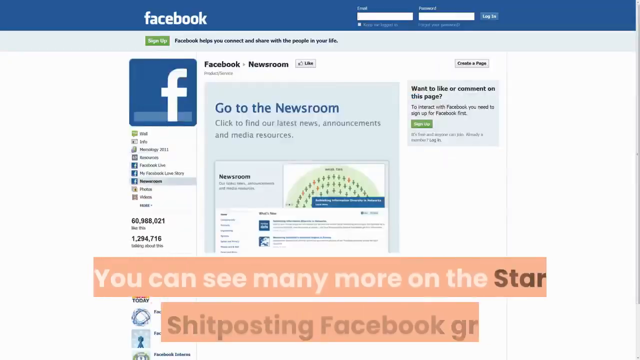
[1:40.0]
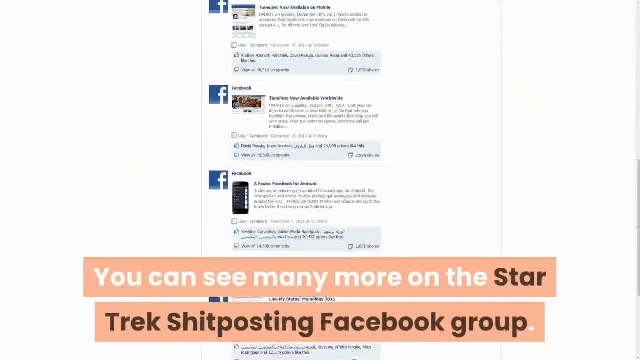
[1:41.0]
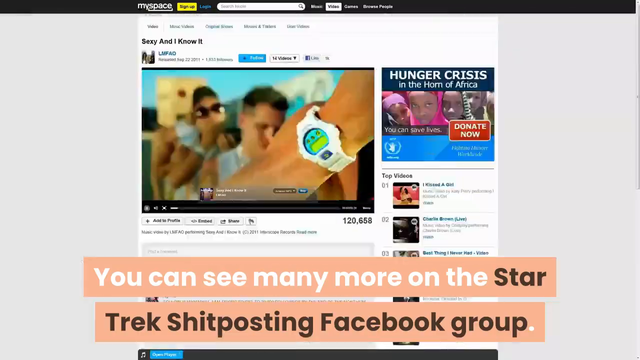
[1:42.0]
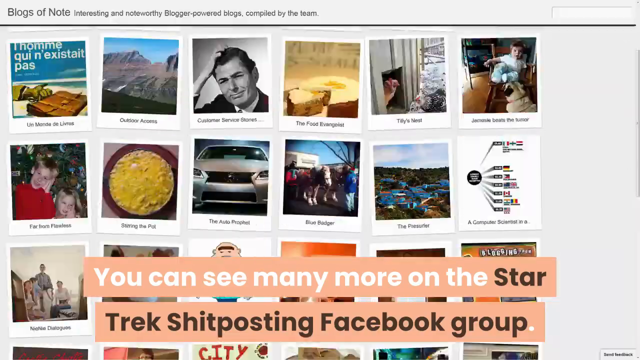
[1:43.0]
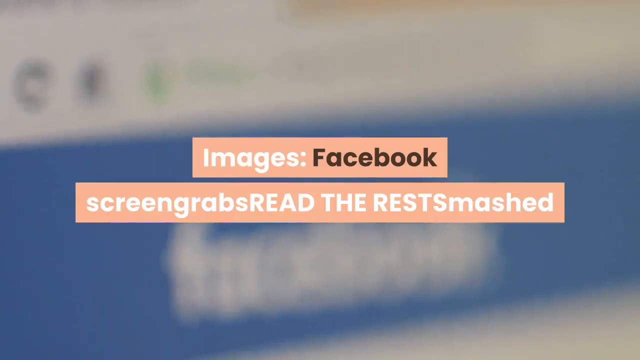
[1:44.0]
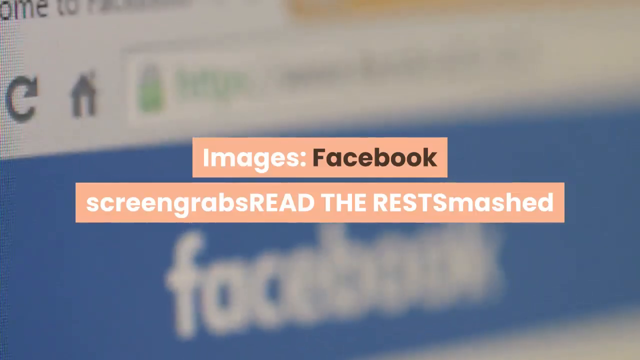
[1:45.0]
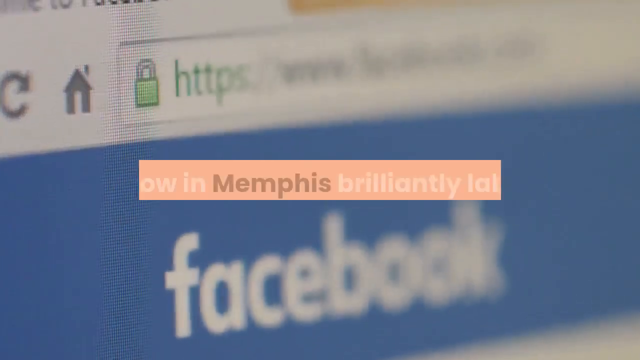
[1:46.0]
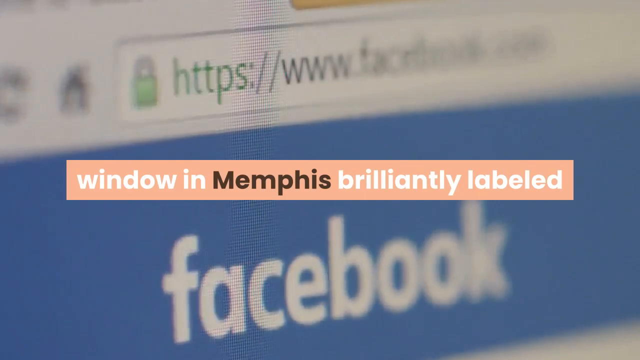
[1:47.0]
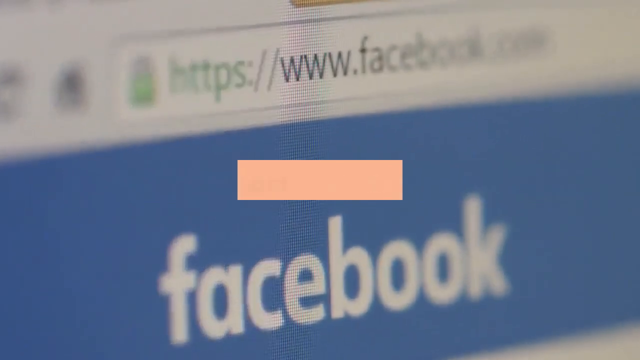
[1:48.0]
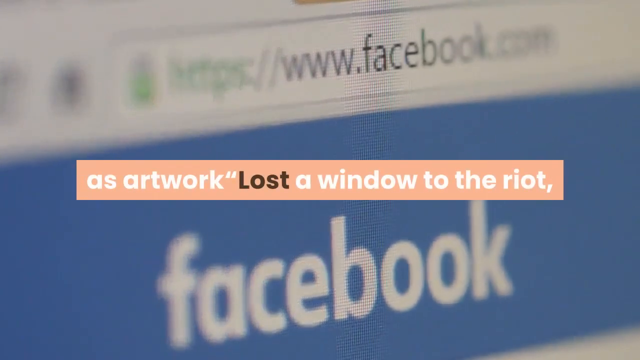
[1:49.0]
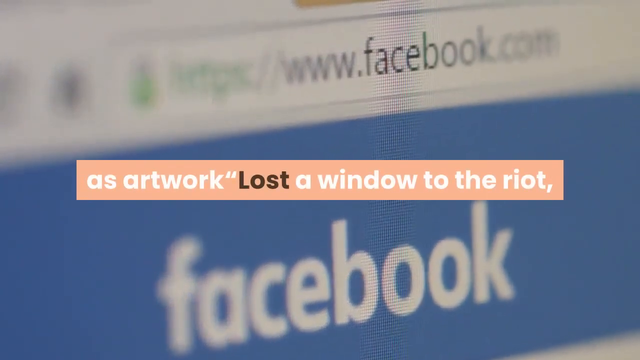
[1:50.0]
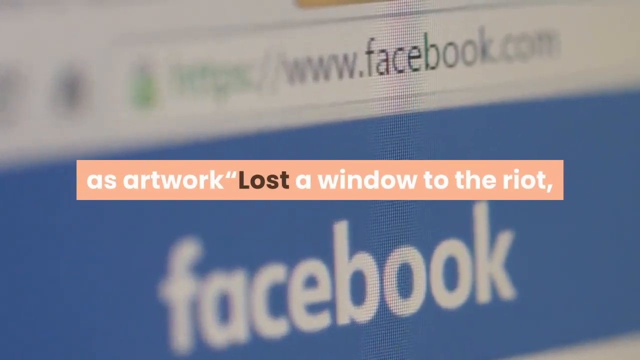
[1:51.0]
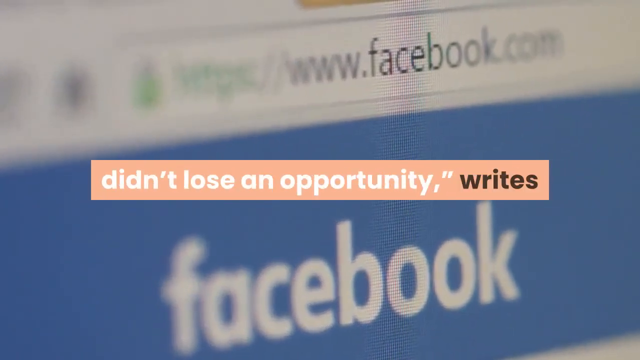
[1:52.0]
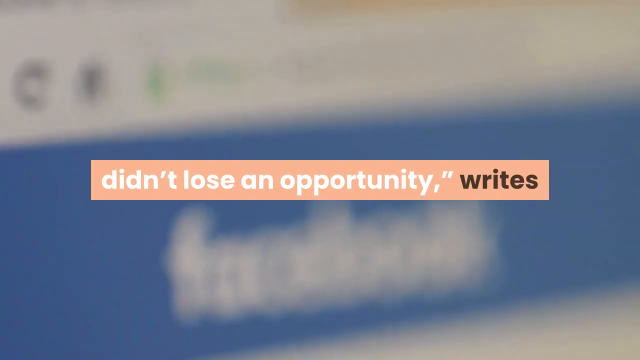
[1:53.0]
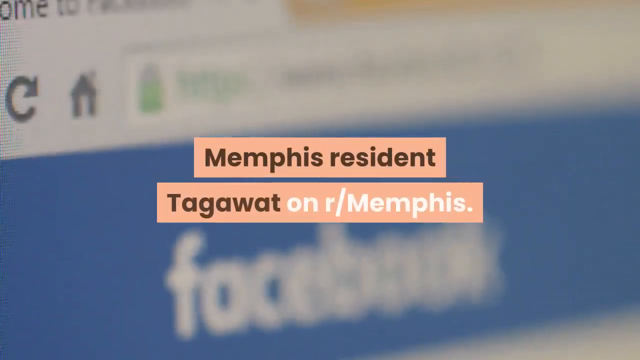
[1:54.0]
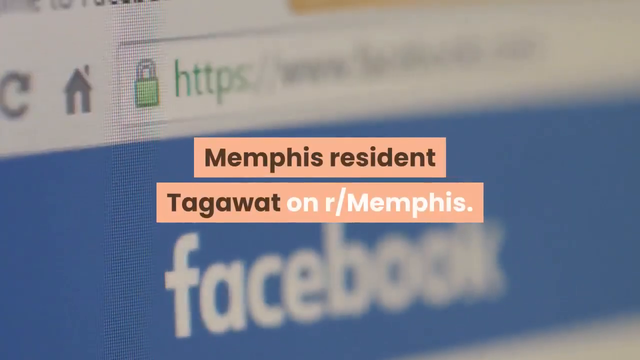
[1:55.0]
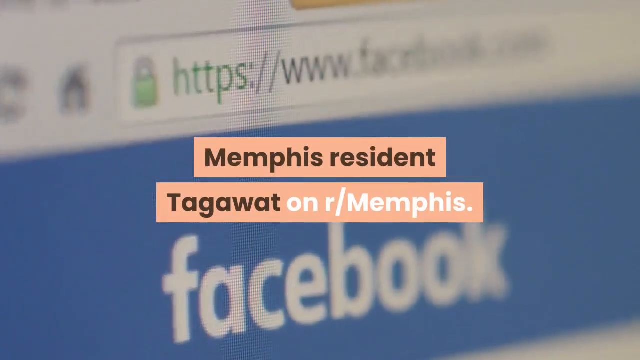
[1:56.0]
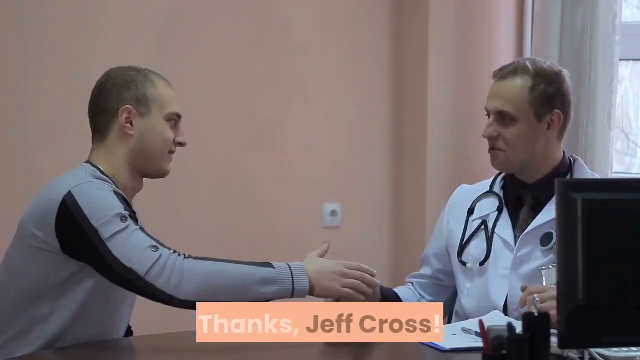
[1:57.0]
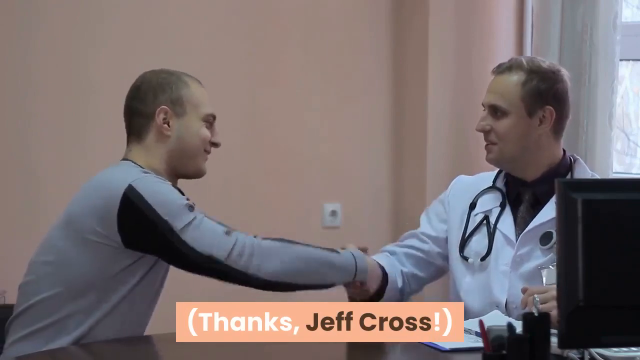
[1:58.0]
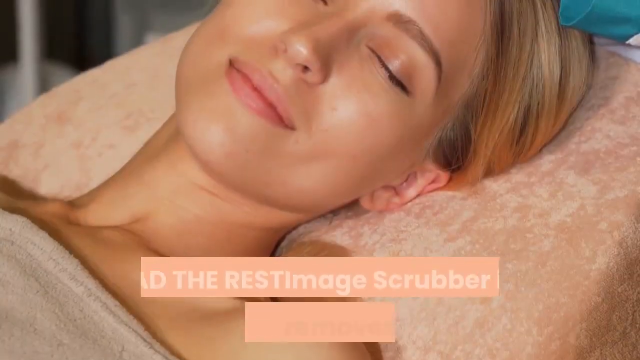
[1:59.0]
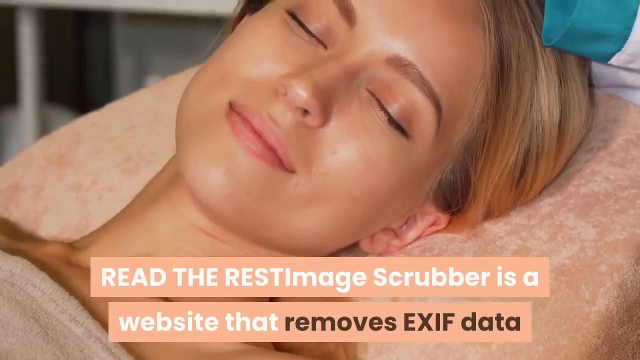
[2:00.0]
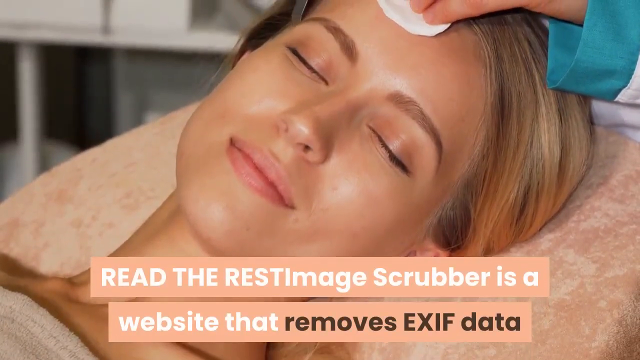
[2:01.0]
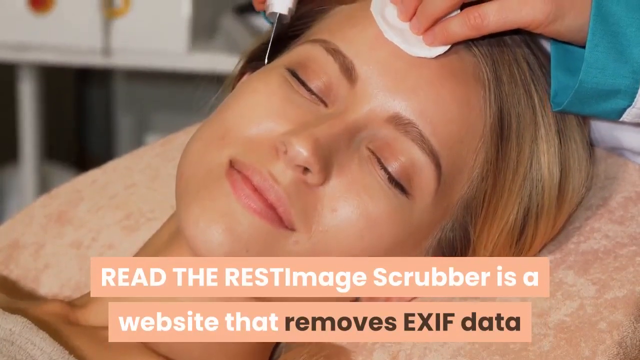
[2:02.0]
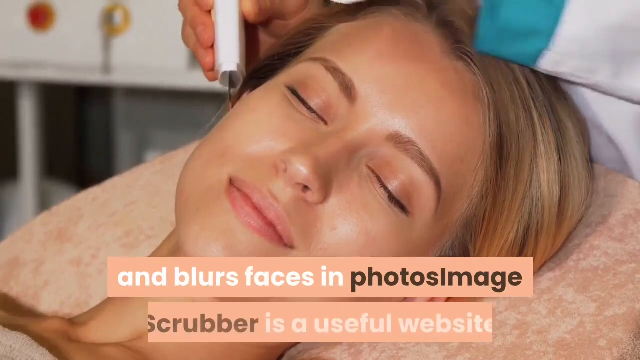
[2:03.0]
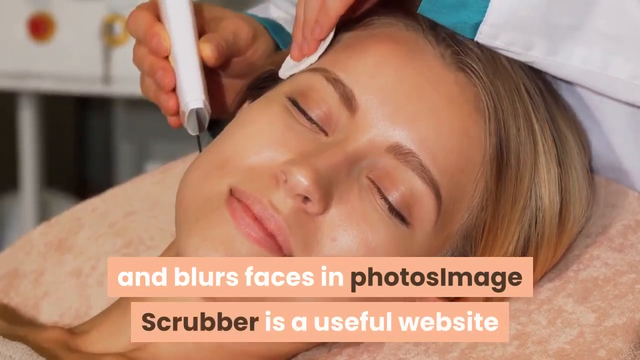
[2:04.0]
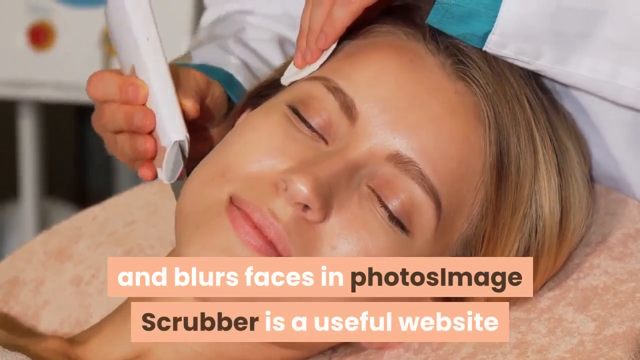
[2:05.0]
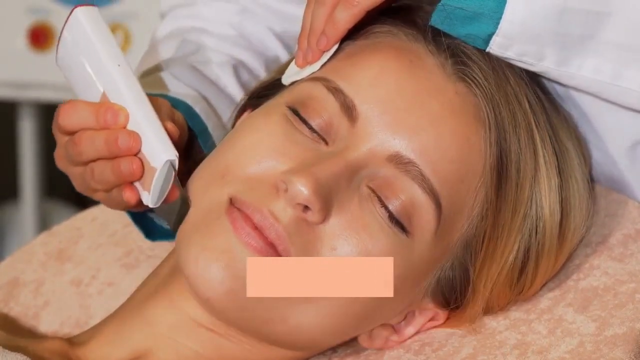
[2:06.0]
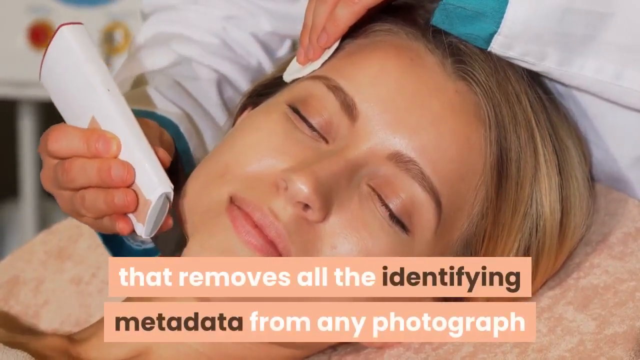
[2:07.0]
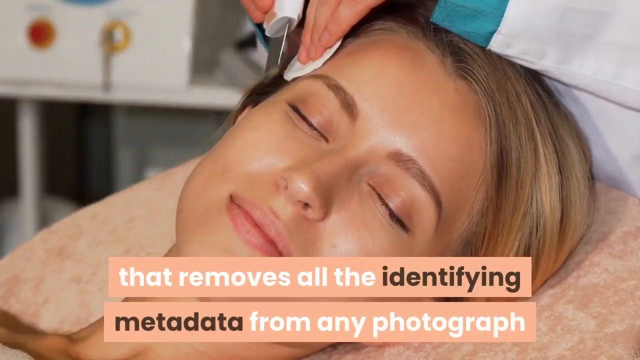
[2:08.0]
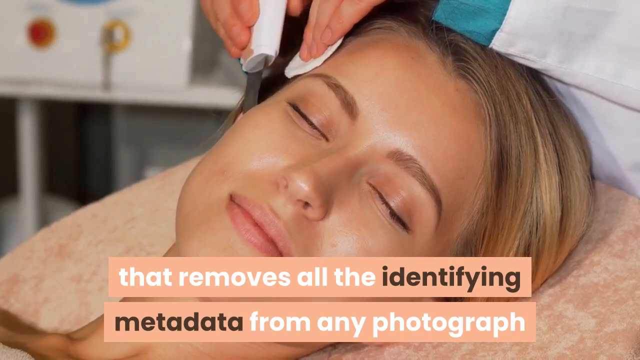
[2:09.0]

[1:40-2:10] Facebook pages flick by very quickly in the background, too fast to see what is shown. Text at the bottom reads "you can see many more on the Star Trek shitposting Facebook group." The flicking screens include pages such as Facebook videos and Facebook newsroom. A Myspace page follows, featuring items such as The Fray, Nicki Minaj, Kim Kardashian, Project X and Hunger Games, with a title reading "MySpace, home of the largest catalogue of free streaming music on the web." Another website, Blogger Buzz, is then navigated, with the motto "the official buzz from Blogger at Google." Text at the bottom of the screen continues: "Images, Facebook, screen grabs", then "smashed window in Memphis brilliantly labeled as artwork" and "lost a window to the riot didn't lose an opportunity writes Memphis resident Tagawatt on r/Memphis". The background then shows two men shaking hands; one appears to be a medical professional, in white clothing with a stethoscope around his neck. The text reads "thanks Jeff Cross." Next, a woman lies on a bed in what appears to be a massage-type environment, and the text continues: "image scrubber is a website that removes exif data and blurs faces in photos image scrubber is a useful website that removes all the identifying metadata from any photograph." Many of the on-screen text captions contain grammatical flaws and do not read coherently.